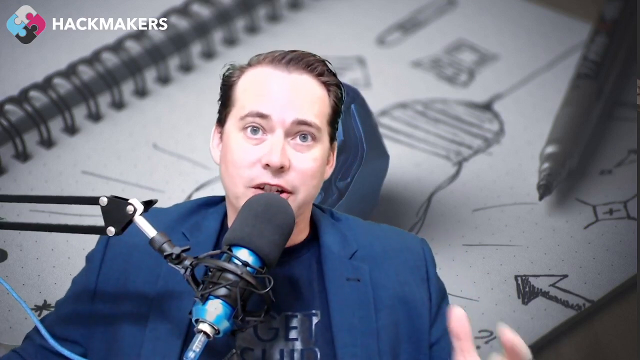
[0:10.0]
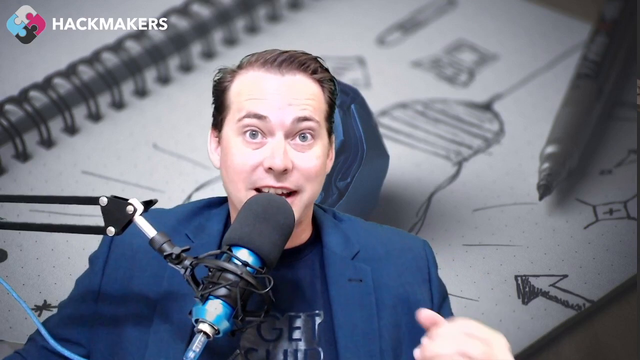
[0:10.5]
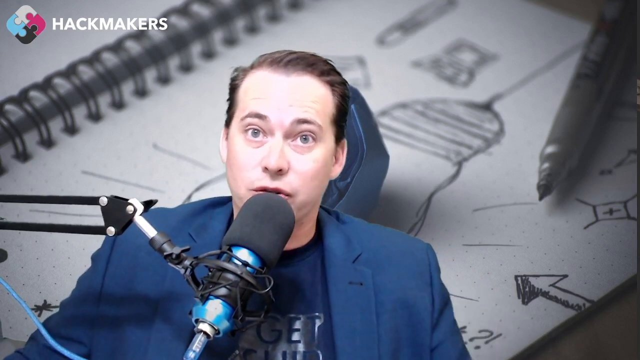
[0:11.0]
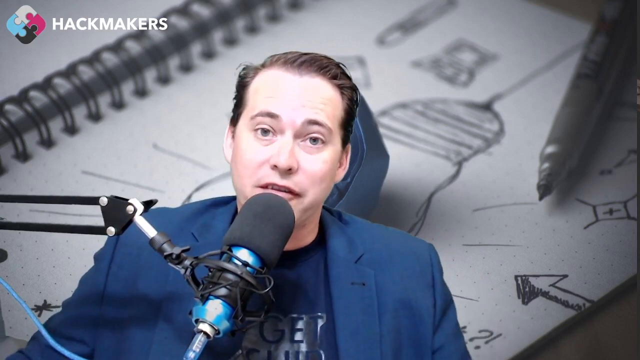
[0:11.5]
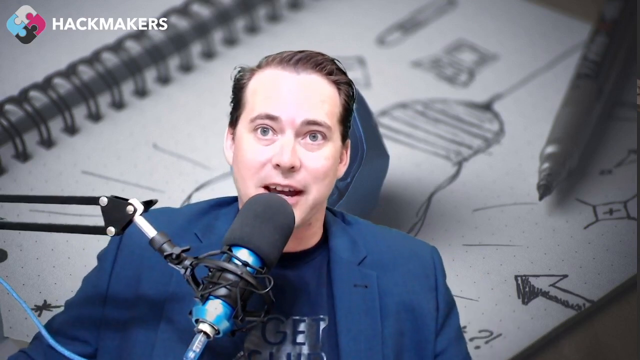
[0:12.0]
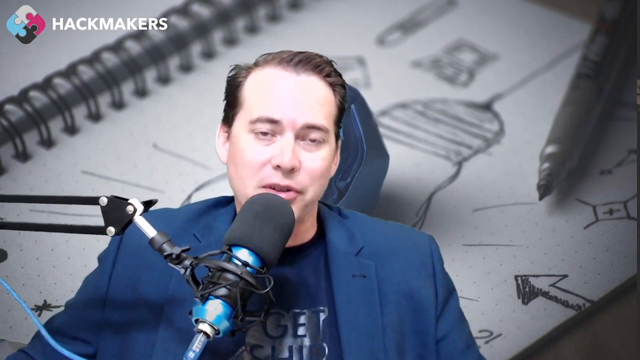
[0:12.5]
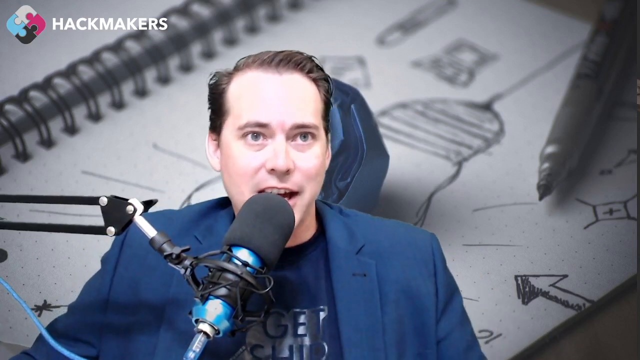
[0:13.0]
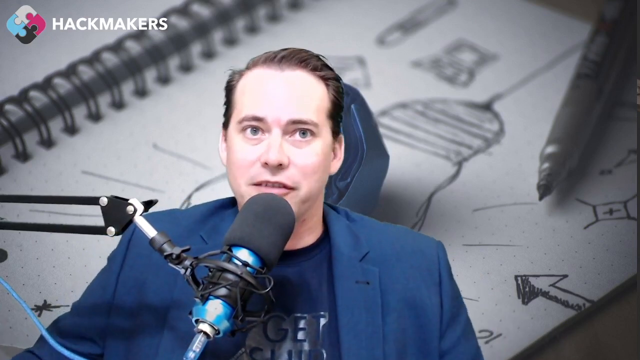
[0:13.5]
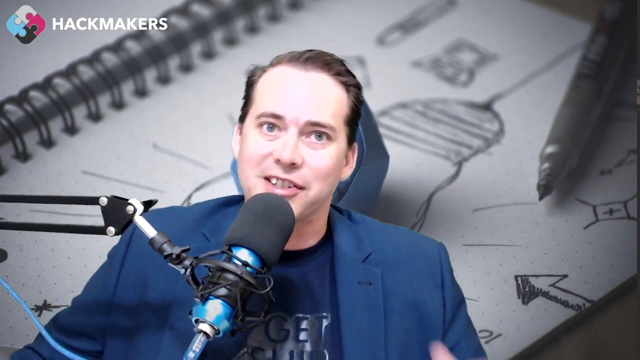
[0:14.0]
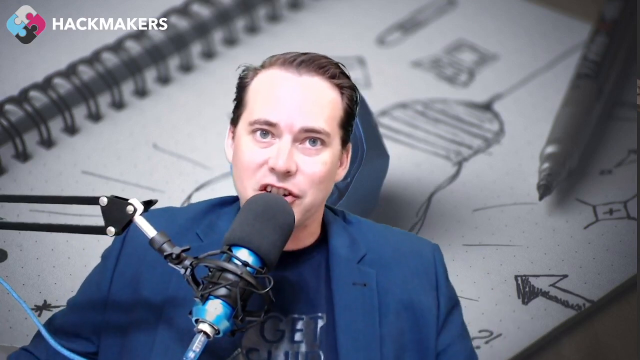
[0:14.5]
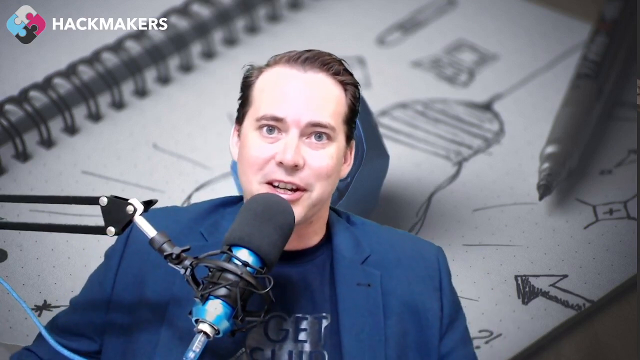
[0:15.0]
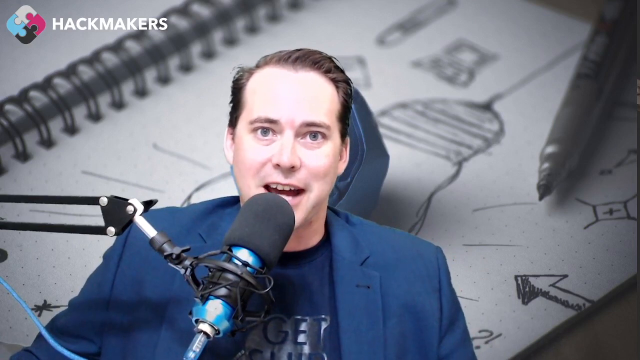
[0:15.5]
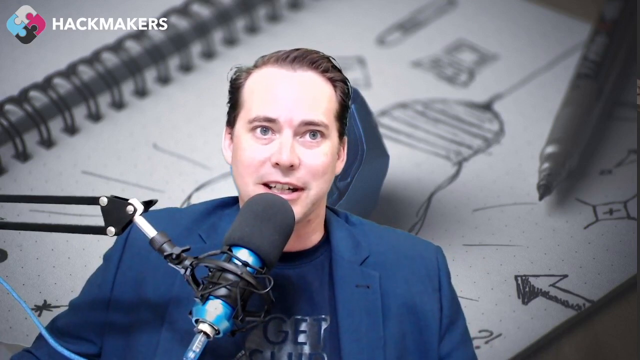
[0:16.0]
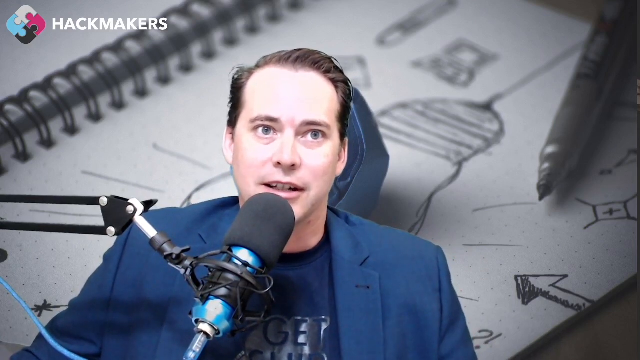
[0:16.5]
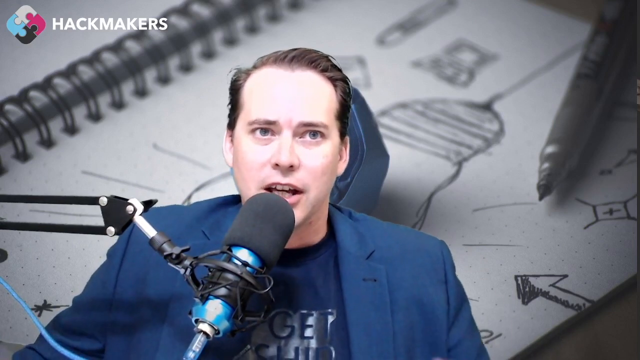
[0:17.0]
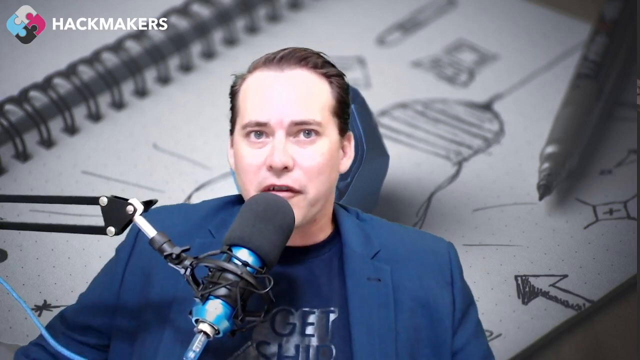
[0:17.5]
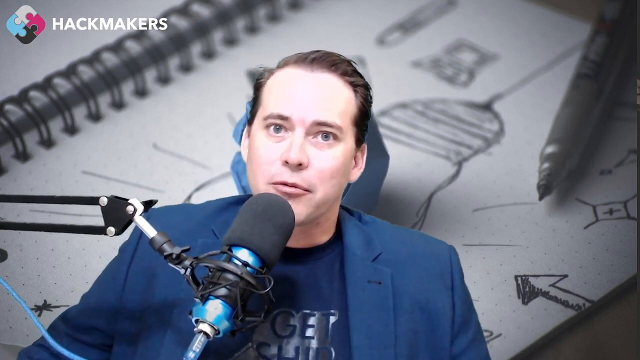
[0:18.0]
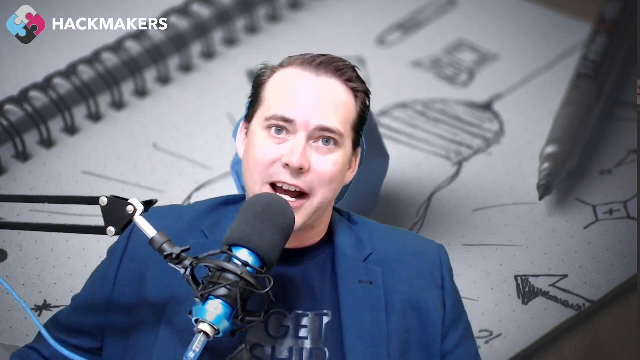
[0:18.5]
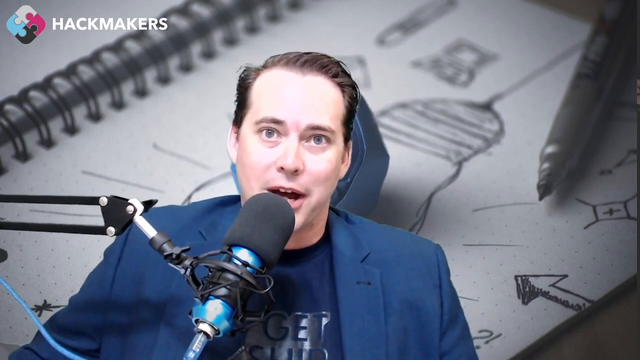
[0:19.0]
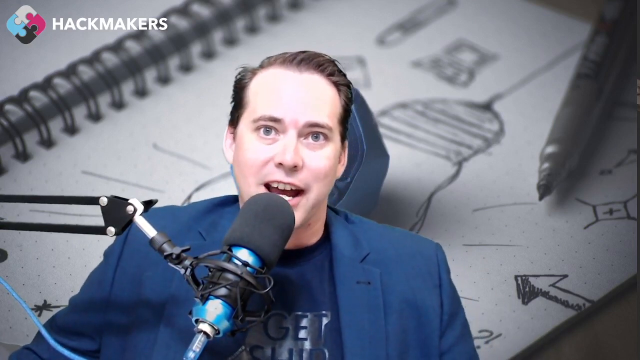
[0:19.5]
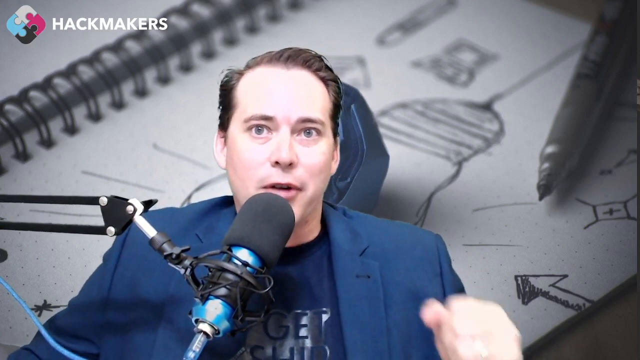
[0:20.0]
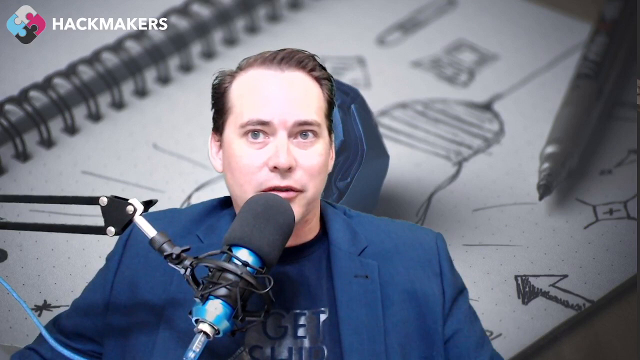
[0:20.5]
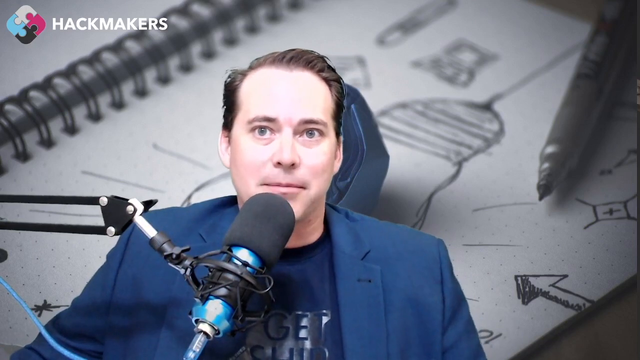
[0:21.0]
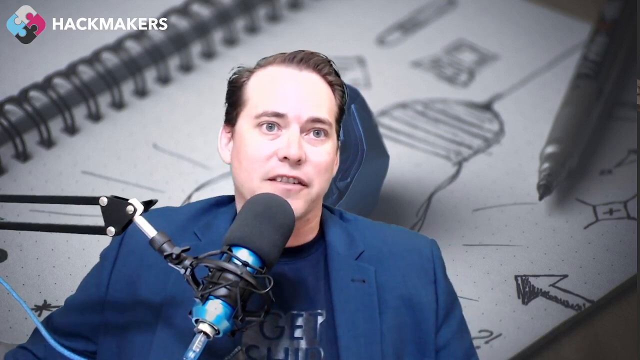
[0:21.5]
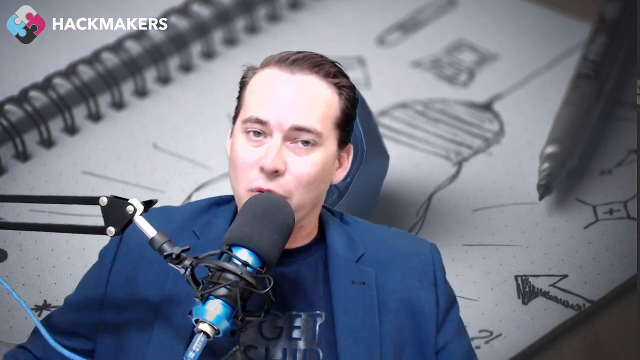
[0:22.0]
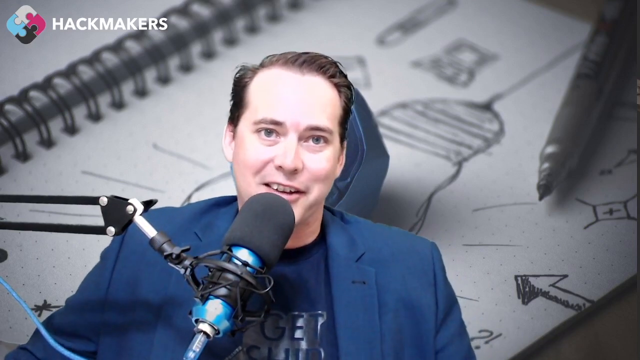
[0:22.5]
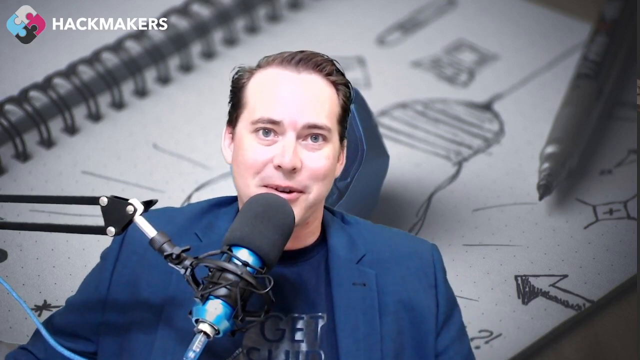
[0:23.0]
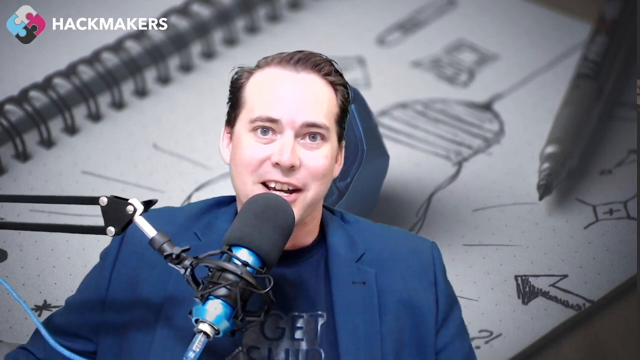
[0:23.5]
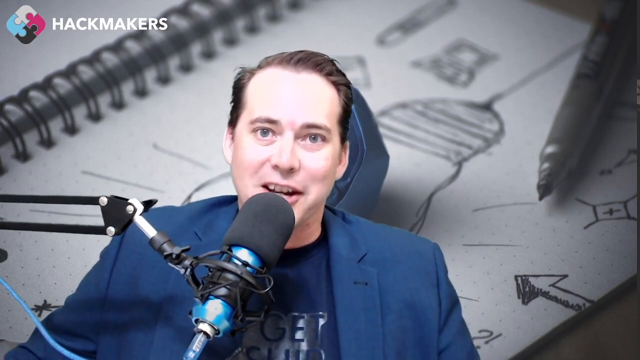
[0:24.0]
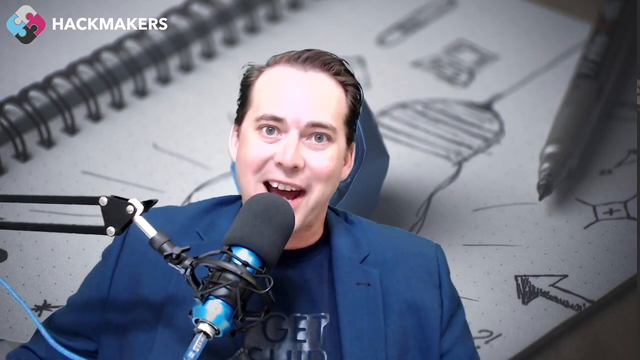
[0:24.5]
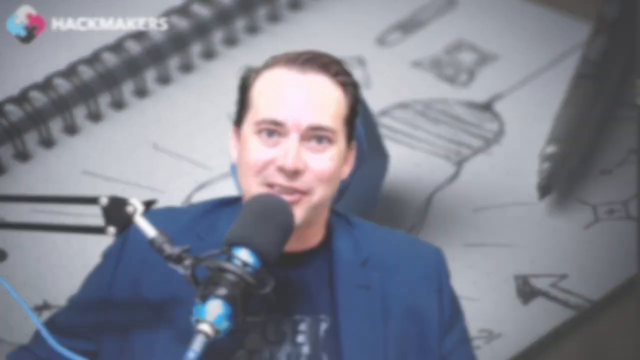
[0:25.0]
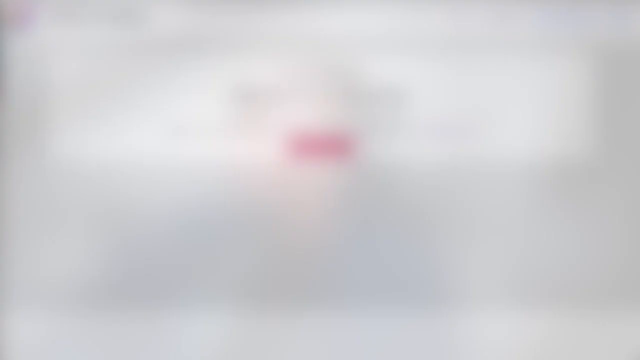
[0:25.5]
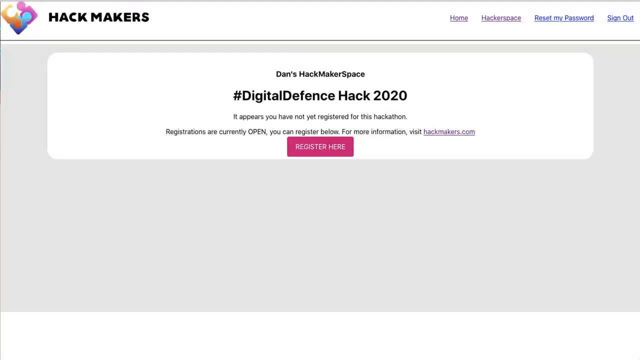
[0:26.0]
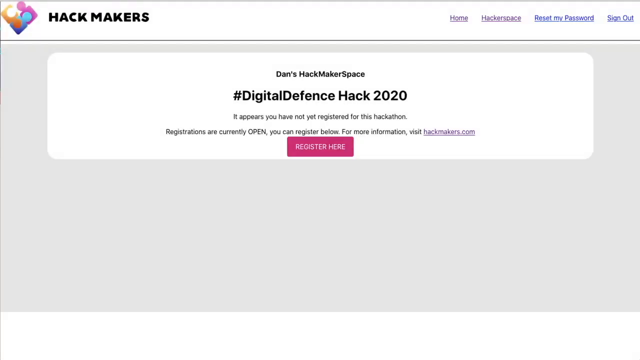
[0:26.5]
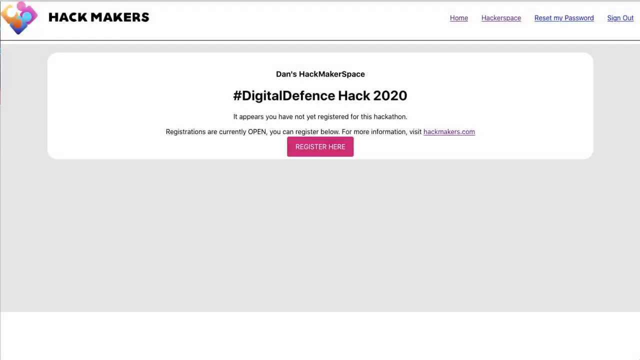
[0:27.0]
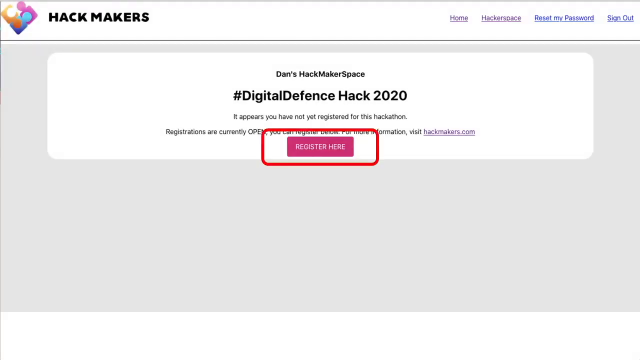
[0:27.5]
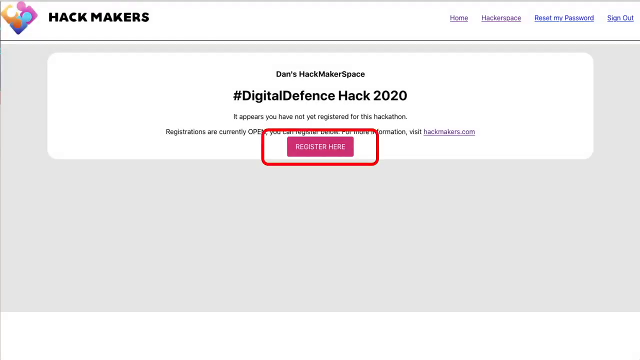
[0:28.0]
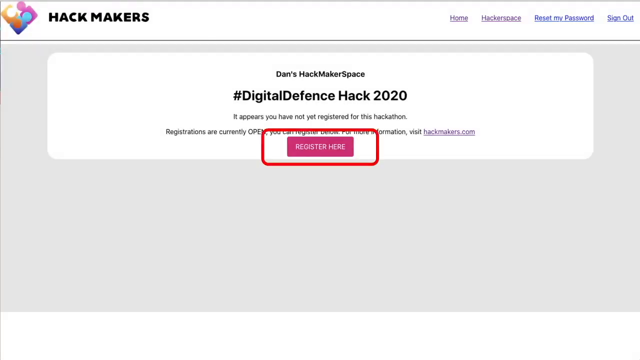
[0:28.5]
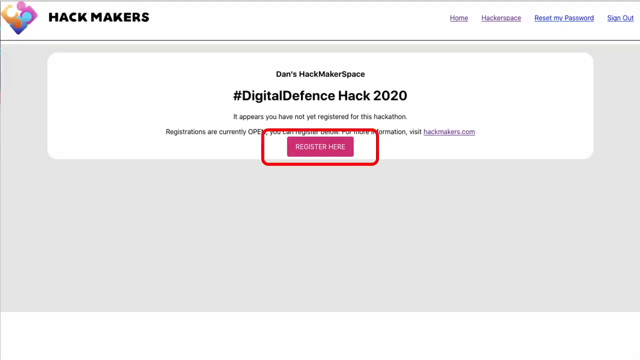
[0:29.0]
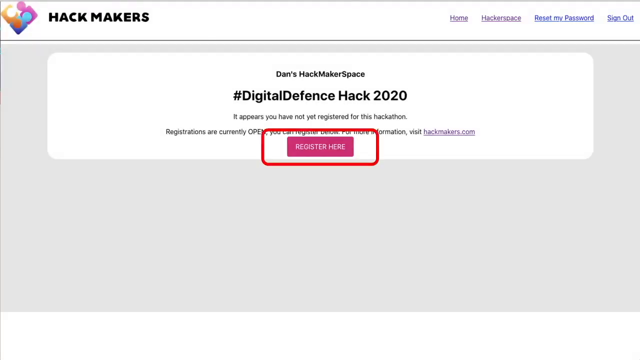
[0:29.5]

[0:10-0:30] The person wears a navy suit with a navy t-shirt underneath. A microphone on a boom arm comes out of the left side to the middle right; the boom arm is black with some silver pieces here and there. The microphone has a protective foam, and the microphone itself is blue, as is the USB cable connecting it. Facing the viewer, he talks and gestures with his left hand. The background behind him is still, with nothing moving. A Hackmakers webpage then appears. At the top left, the icon's colours have changed to white, yellow, blue and pink, and at the top right are buttons such as "home," "hackerspace," "reset my password" and "sign out."